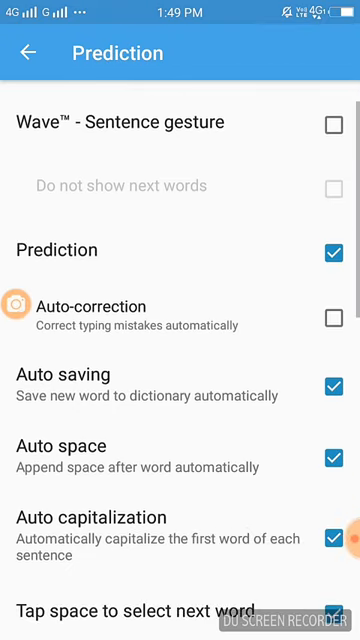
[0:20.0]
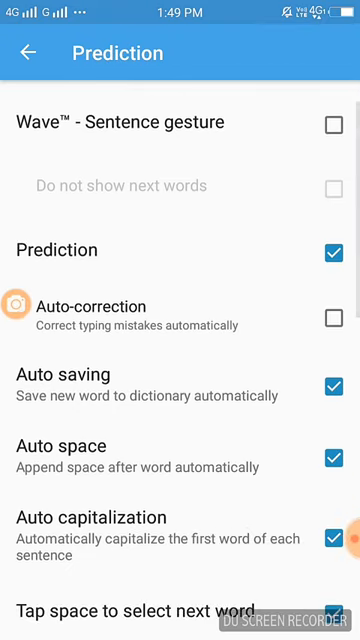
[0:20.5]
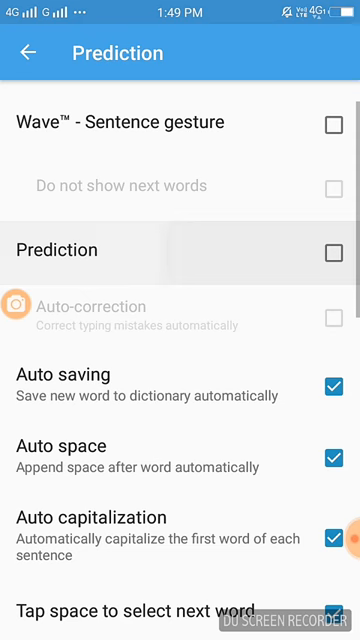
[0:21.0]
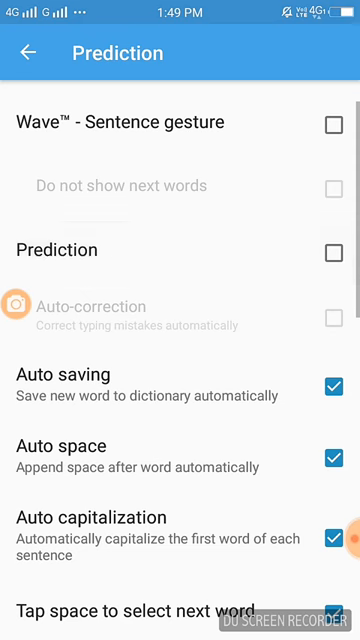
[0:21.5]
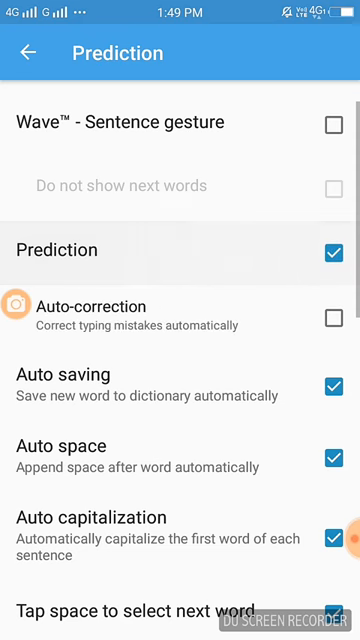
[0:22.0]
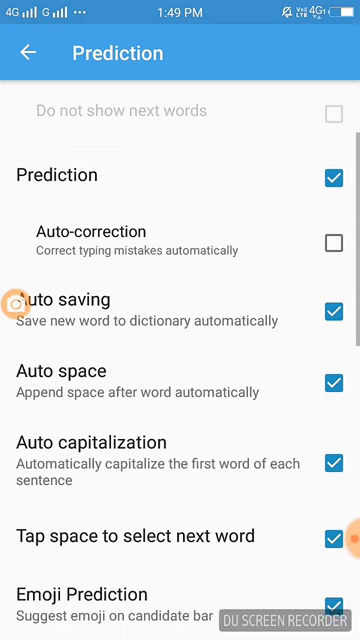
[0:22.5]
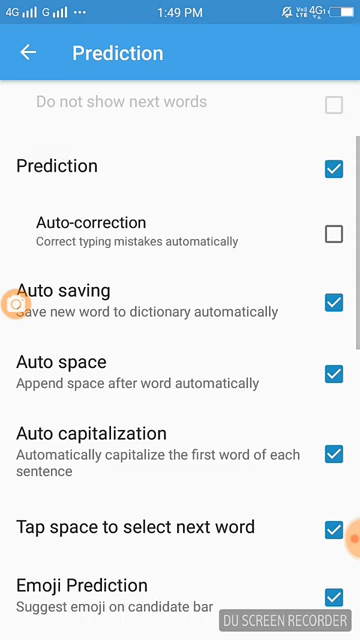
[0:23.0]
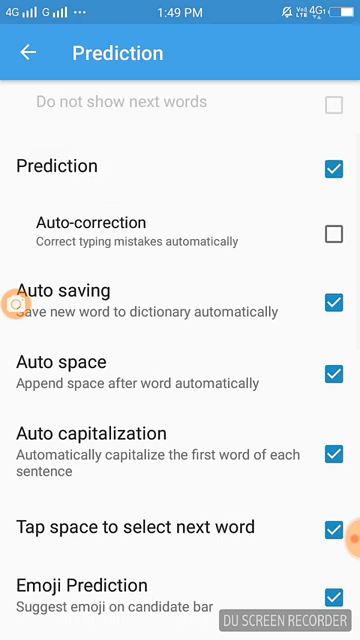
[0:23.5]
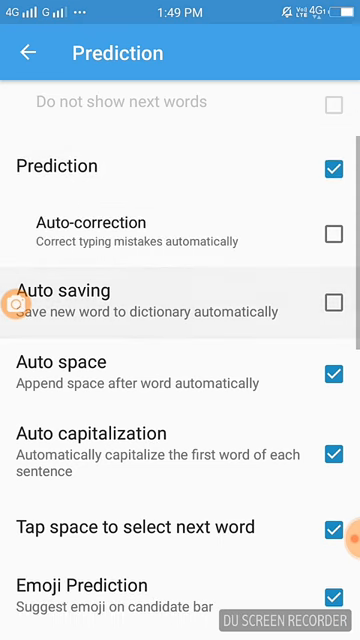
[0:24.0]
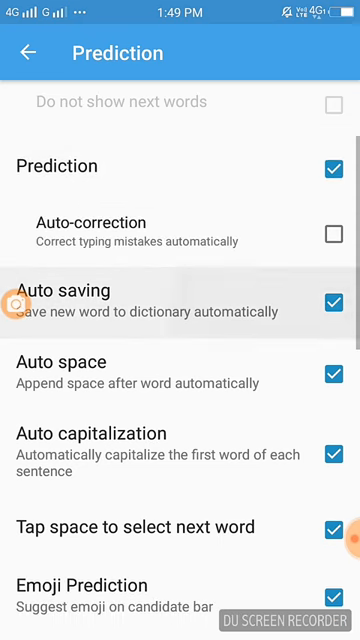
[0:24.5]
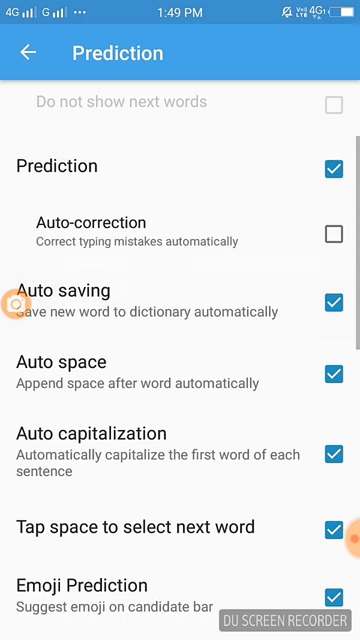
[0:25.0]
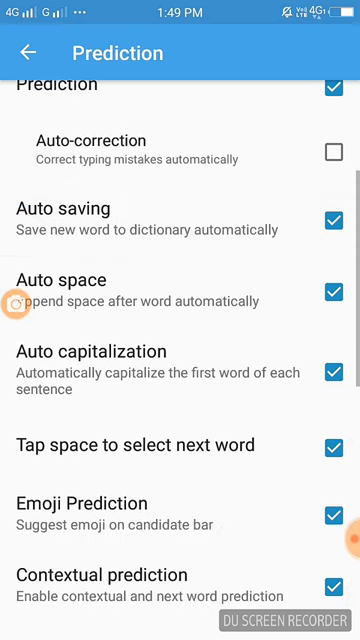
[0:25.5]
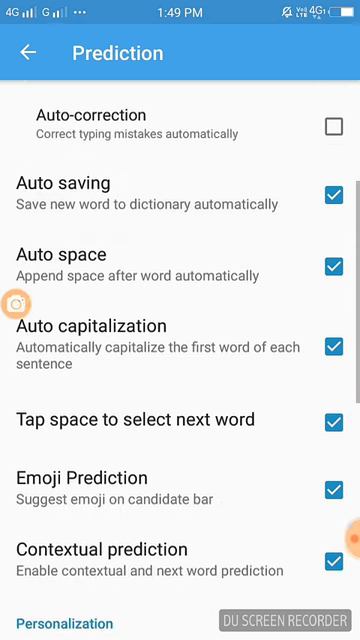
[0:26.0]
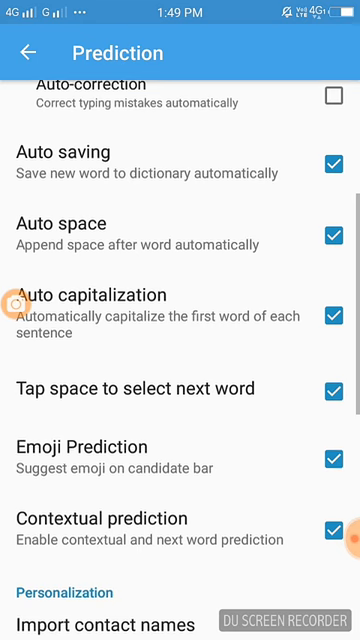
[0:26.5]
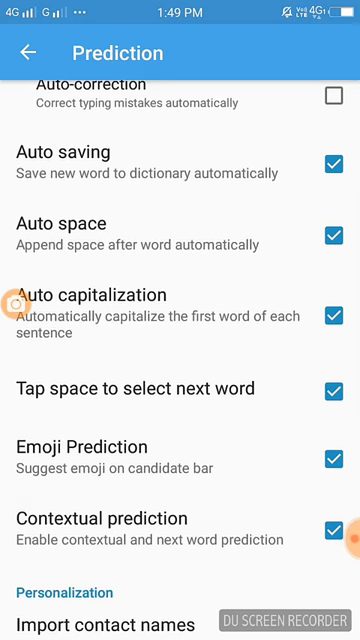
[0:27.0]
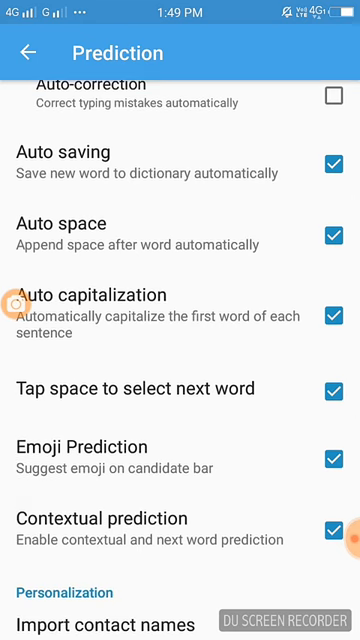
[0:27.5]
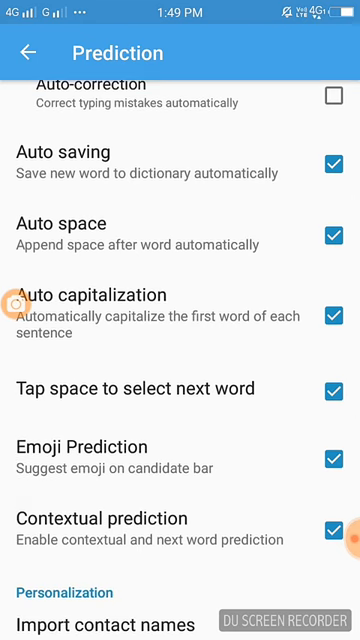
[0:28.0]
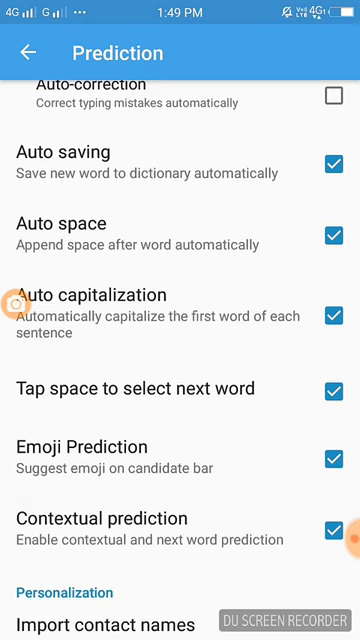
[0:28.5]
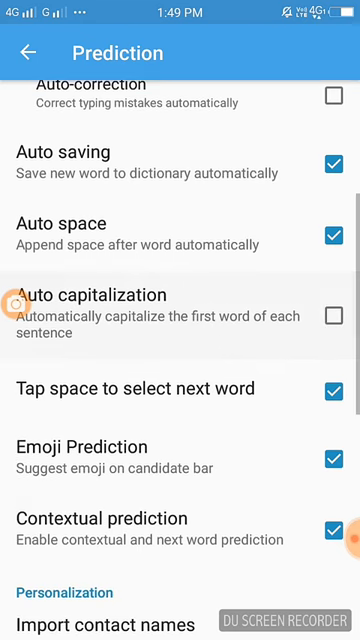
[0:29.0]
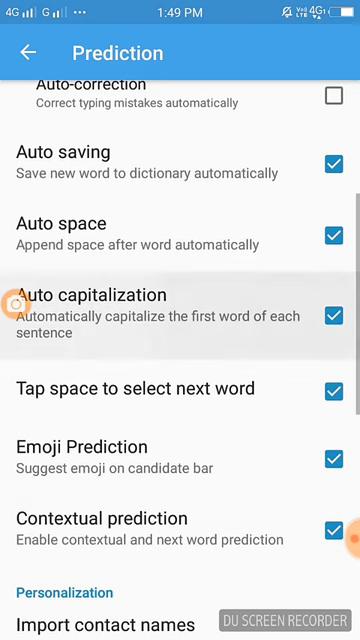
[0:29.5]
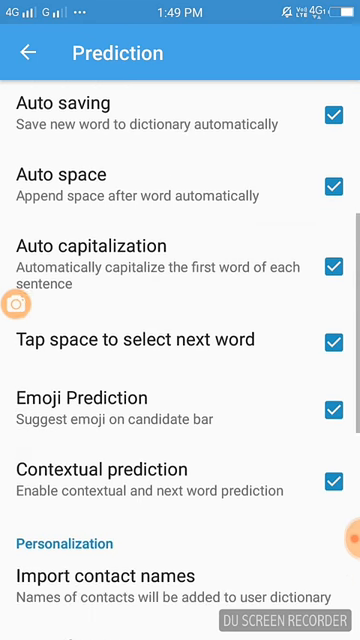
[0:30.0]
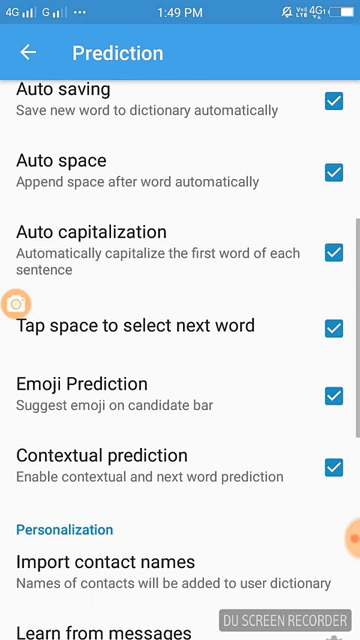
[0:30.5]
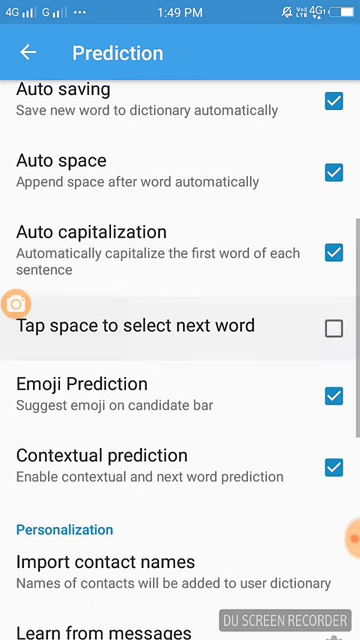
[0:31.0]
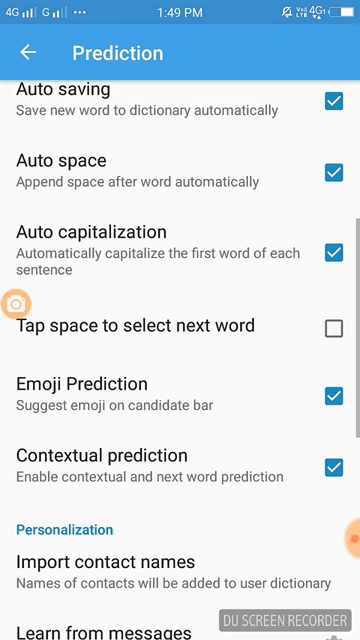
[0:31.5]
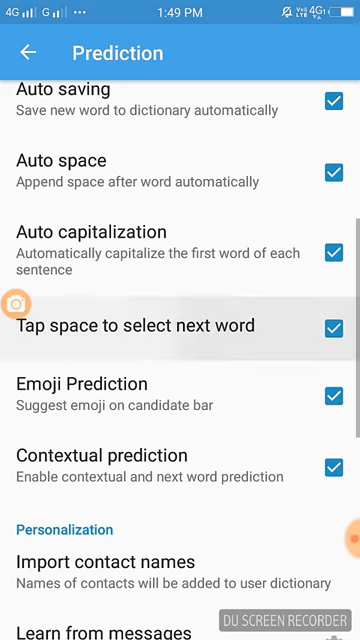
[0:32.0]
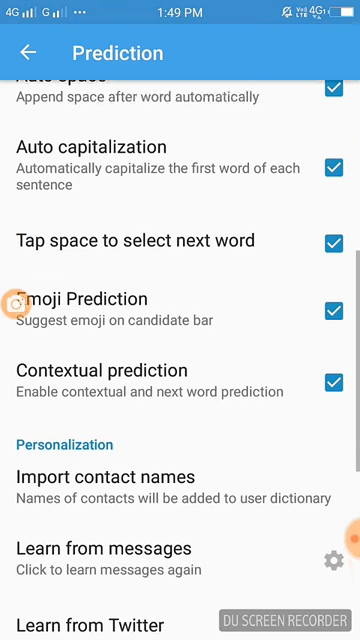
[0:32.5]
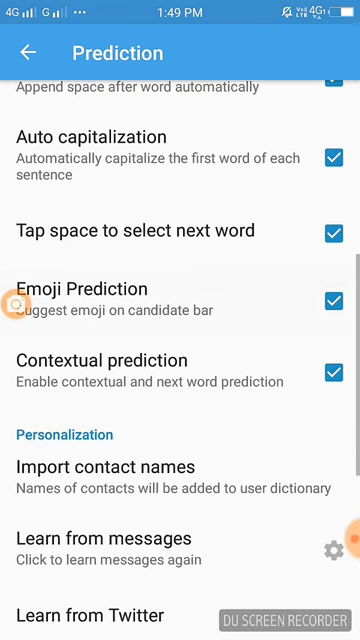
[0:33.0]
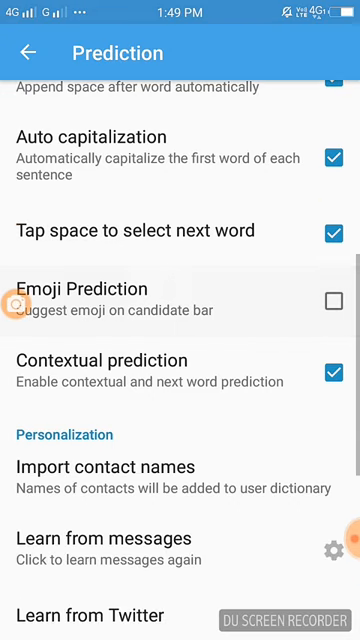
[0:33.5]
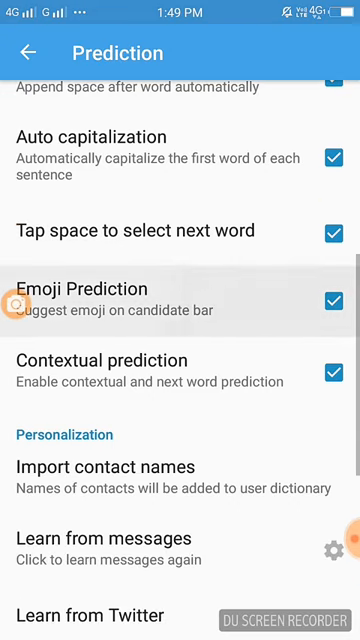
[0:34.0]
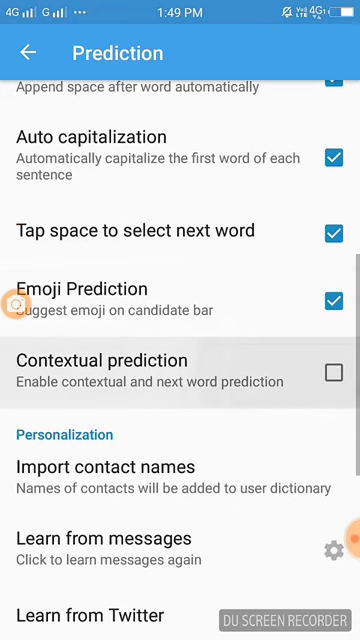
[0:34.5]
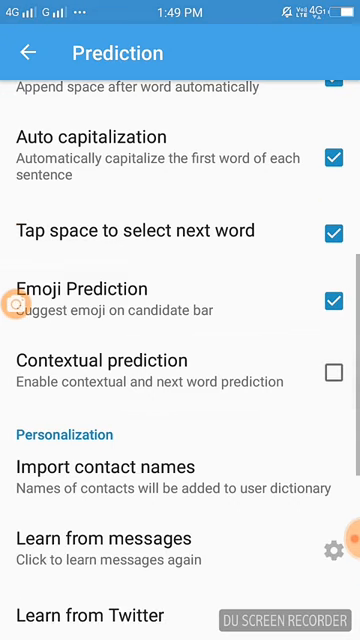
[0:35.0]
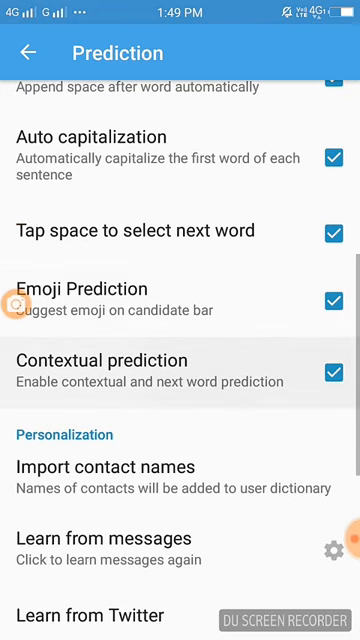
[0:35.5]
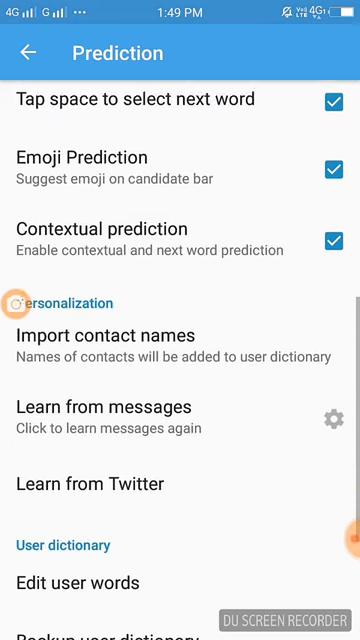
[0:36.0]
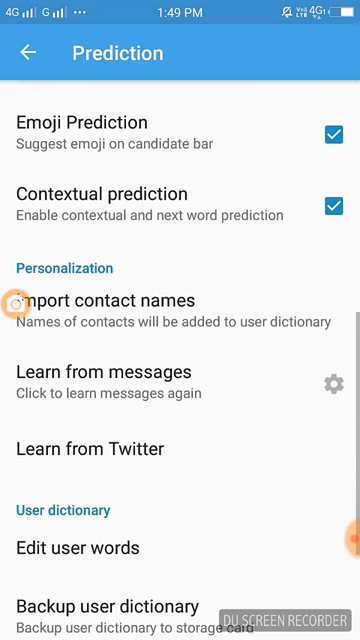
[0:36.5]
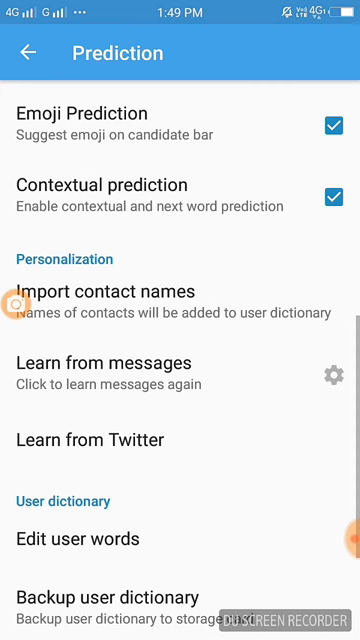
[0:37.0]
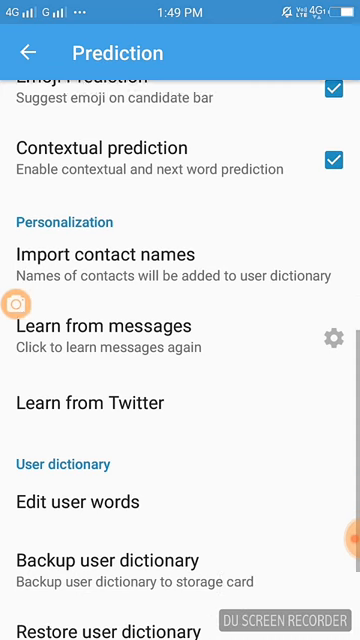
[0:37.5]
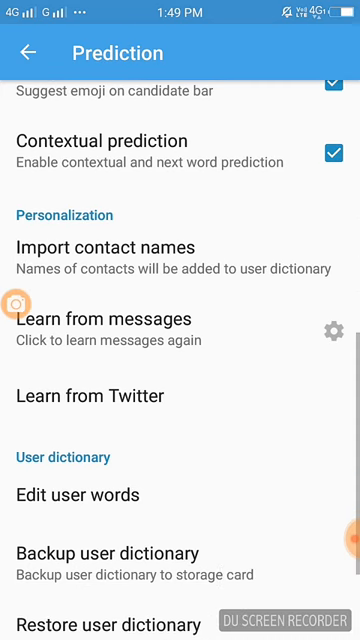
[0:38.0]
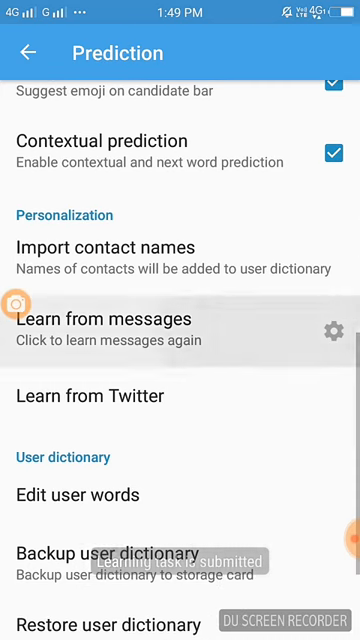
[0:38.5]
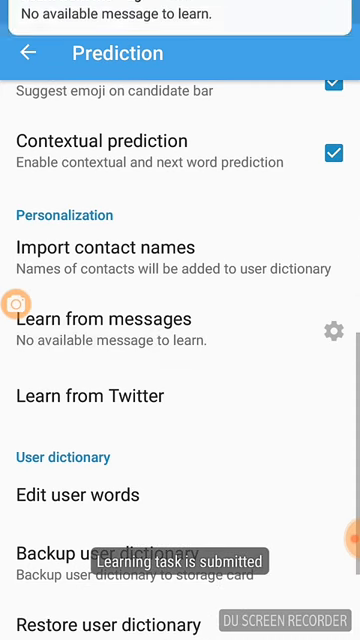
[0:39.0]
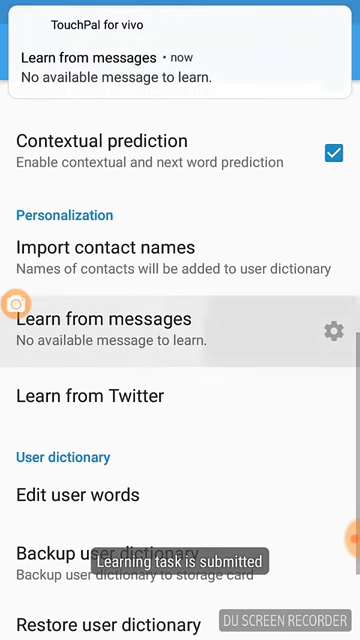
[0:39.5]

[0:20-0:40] Under predictions, the person unchecks predictions, scrolls down, and checks predictions again. They scroll down further and uncheck and check auto savings, and apparently check and uncheck auto capitalization. They uncheck and then check tap space to select next word, and do the same for emoji prediction and contextual prediction. They then scroll to the bottom and click on learn from messages. The person seems to be showing which boxes to uncheck, but checks them again after showing them.